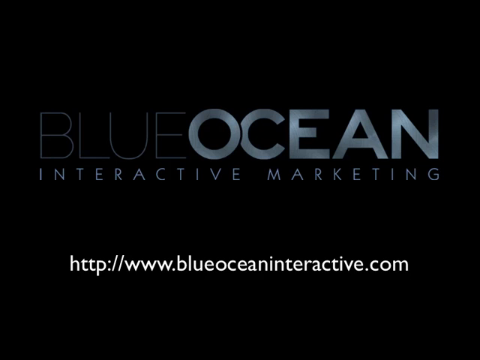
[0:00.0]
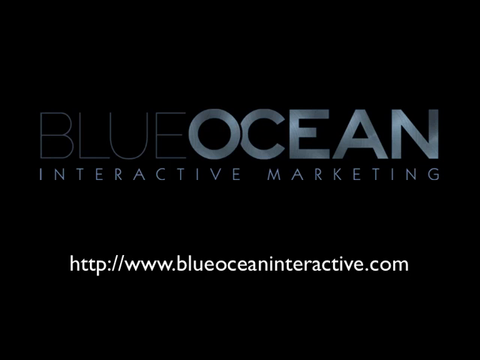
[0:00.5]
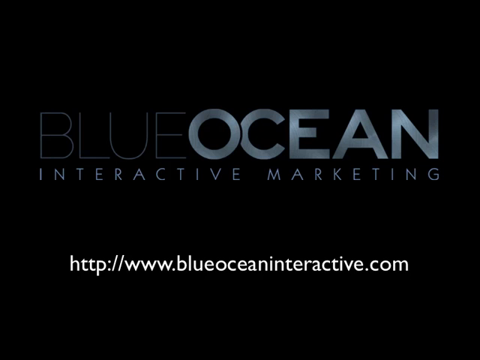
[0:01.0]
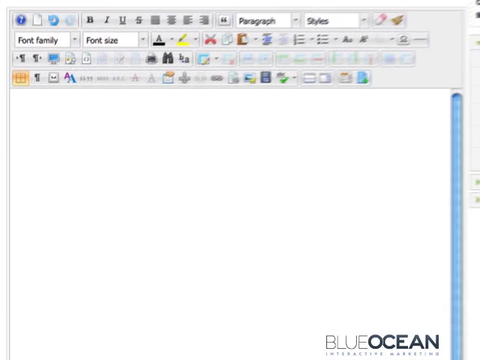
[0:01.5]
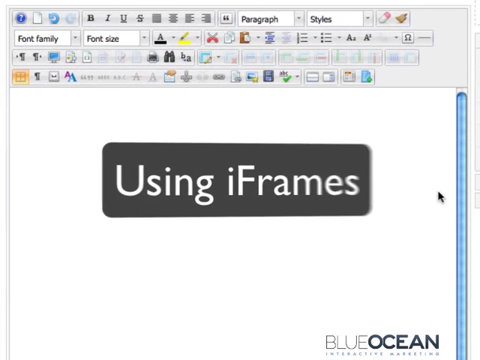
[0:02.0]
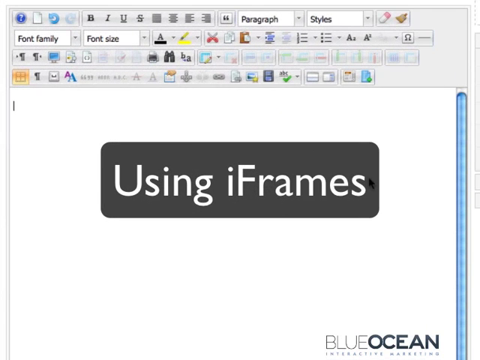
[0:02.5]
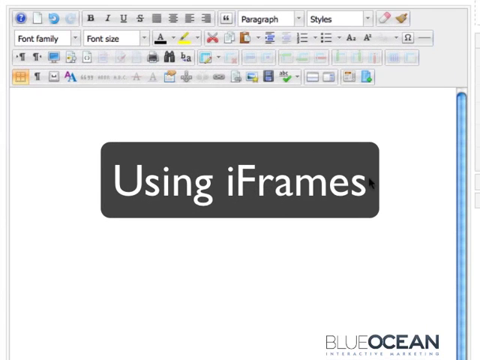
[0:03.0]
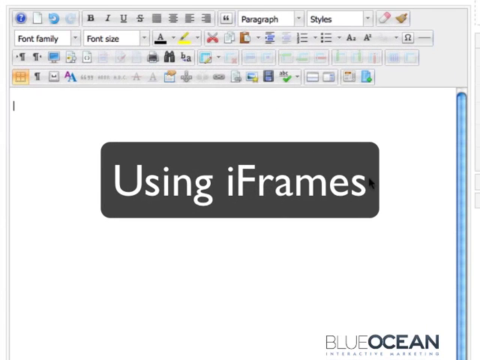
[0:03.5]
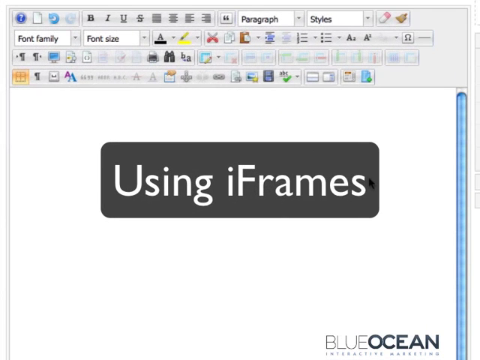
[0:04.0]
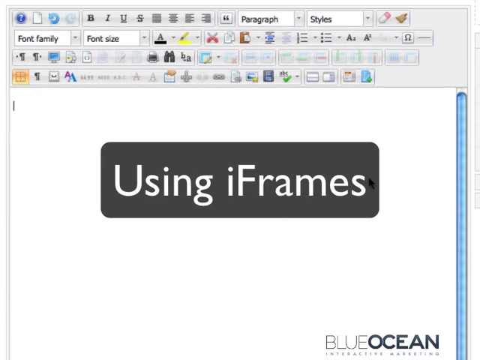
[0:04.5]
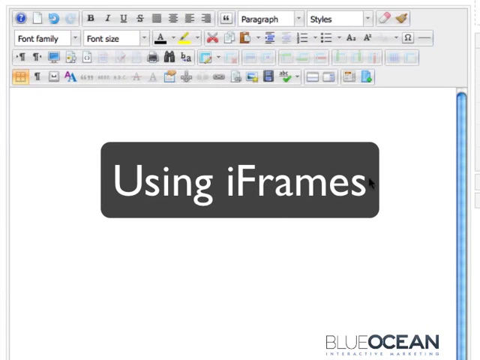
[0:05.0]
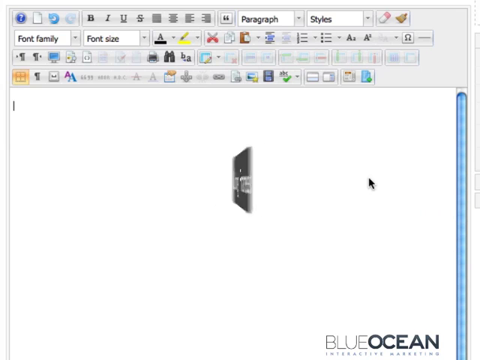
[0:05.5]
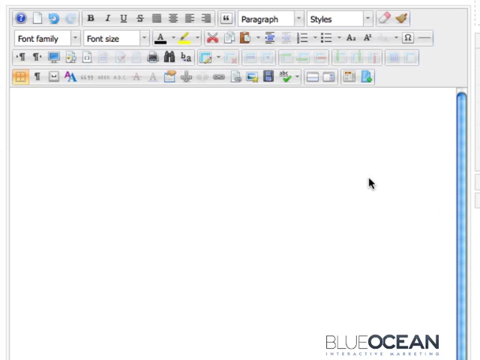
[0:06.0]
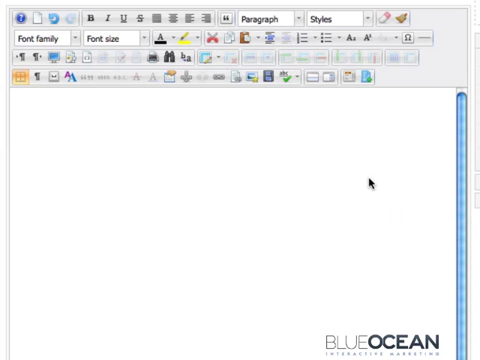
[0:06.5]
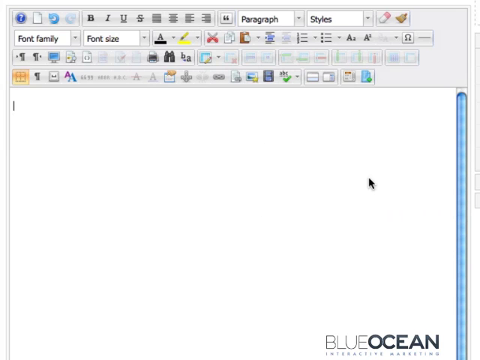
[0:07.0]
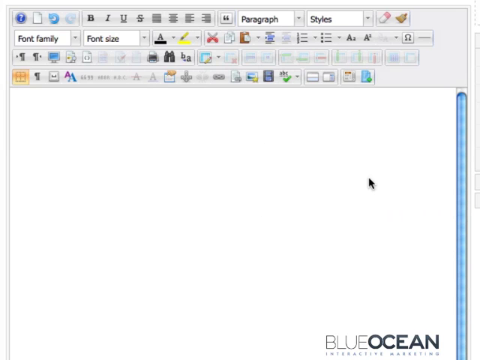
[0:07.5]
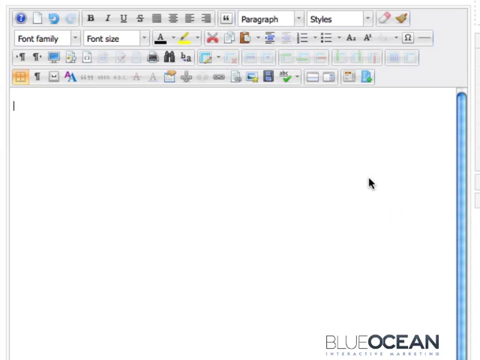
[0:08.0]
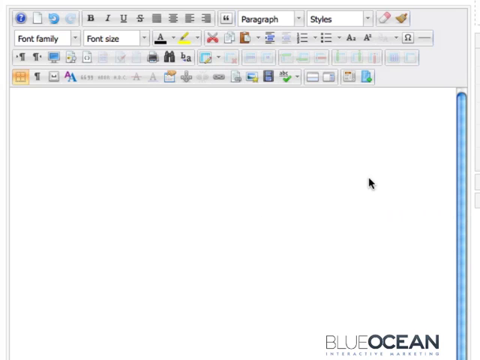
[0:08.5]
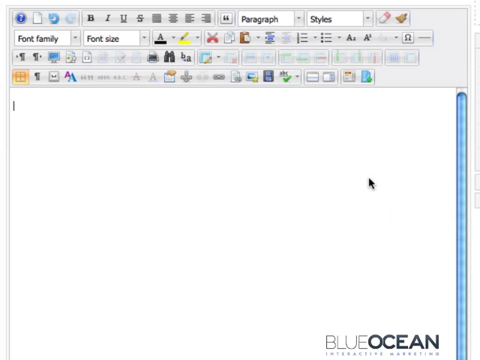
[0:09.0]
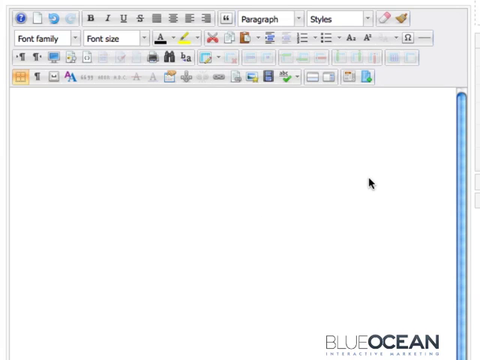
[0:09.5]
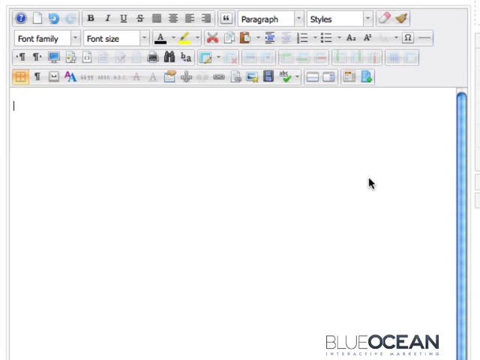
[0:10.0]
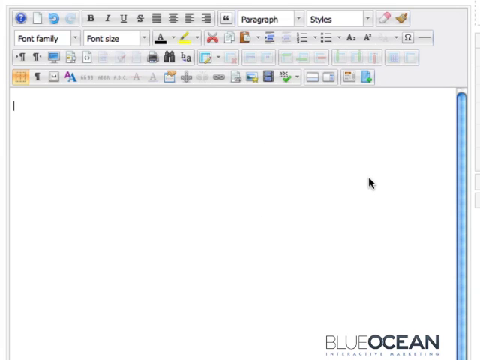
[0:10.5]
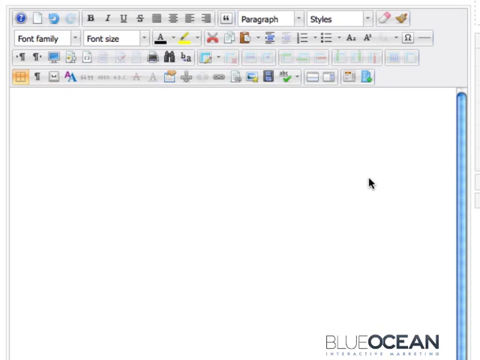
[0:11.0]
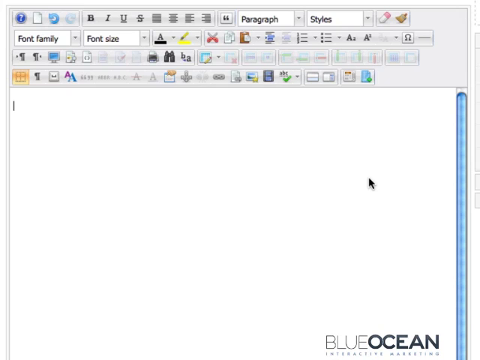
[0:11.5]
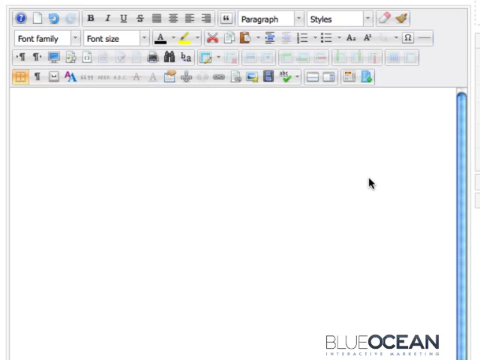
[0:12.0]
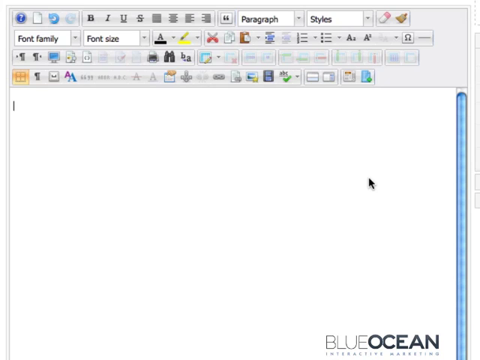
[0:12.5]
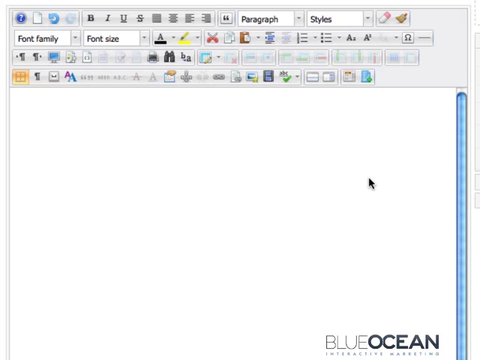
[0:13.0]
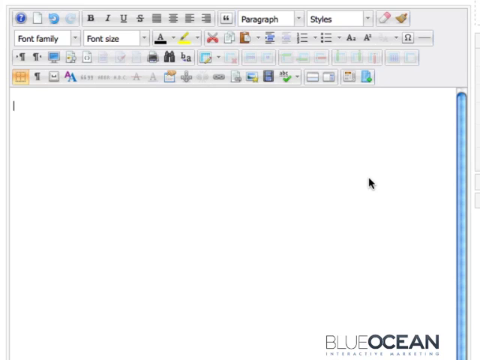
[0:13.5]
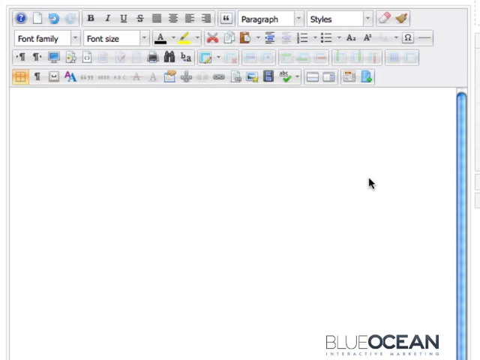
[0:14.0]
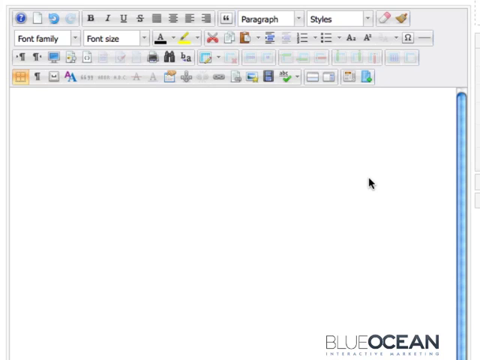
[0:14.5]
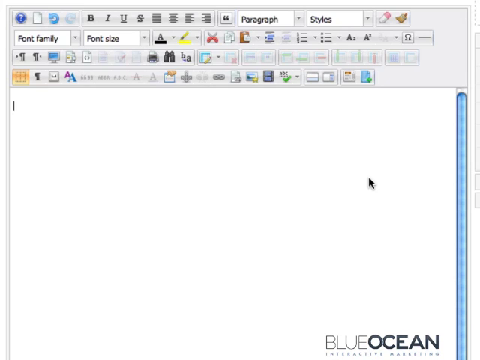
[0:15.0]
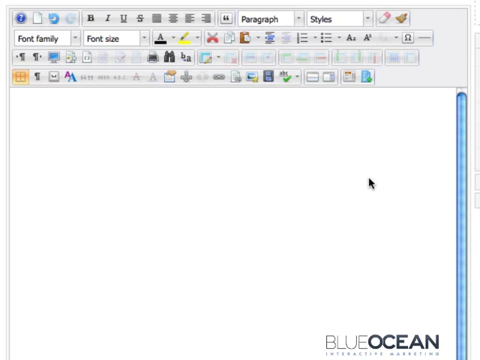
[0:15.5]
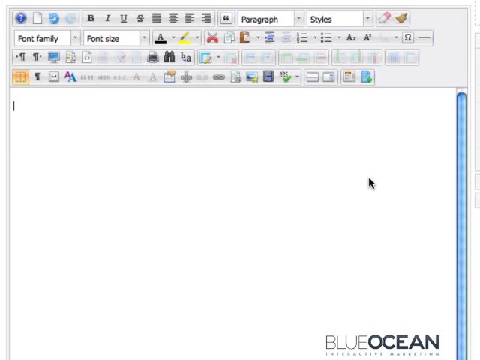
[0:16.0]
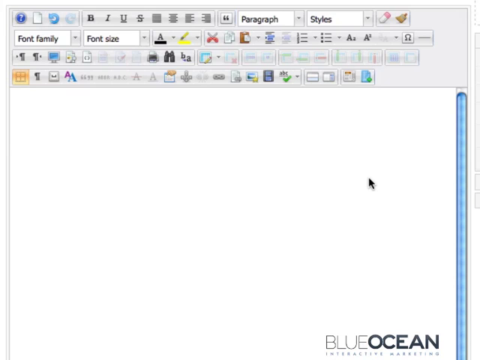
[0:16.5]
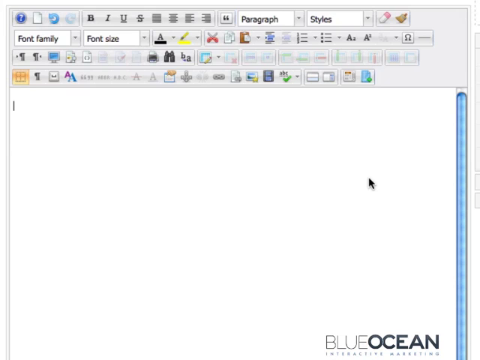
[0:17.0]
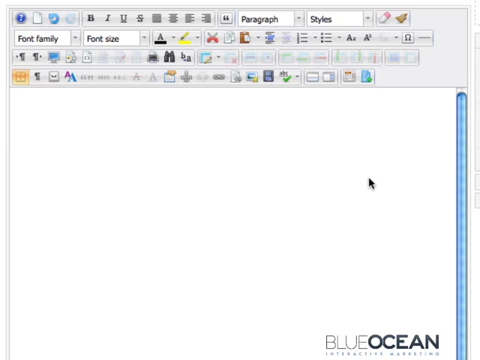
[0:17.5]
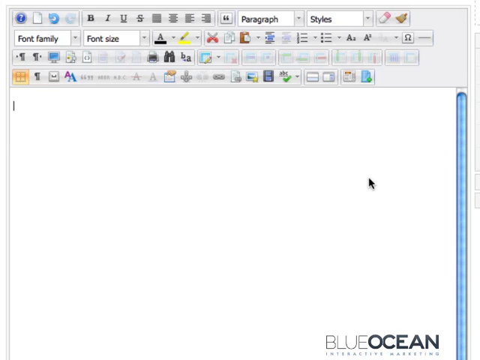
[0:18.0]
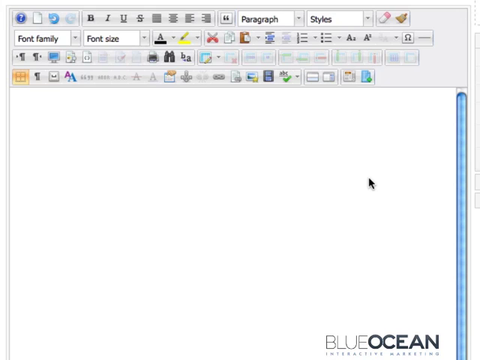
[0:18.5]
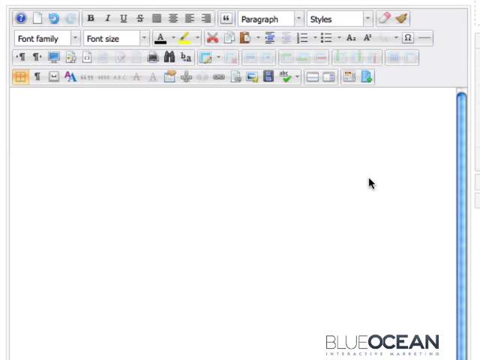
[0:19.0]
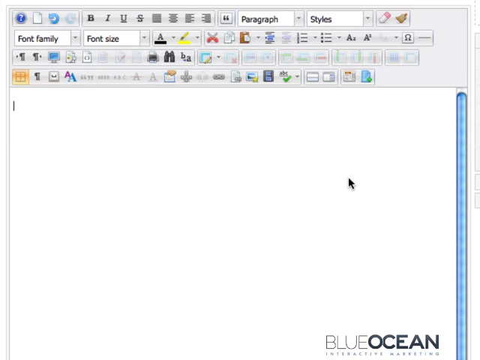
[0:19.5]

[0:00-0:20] A form called "blue ocean interactive marketing" is shown, with the address "http www.blueoceaninteractive.com". Text on the form includes "iframes", "font family" and "font size". Settings and other details are visible and clear on the form, which looks like an organized file.